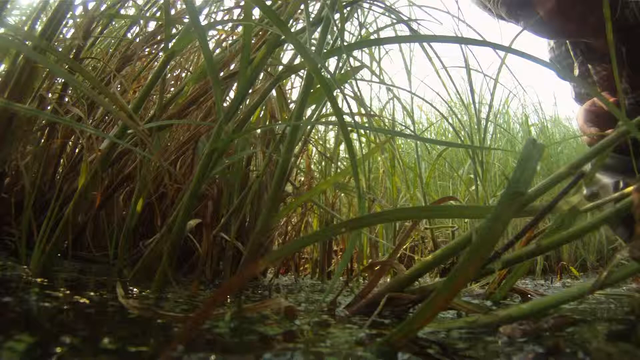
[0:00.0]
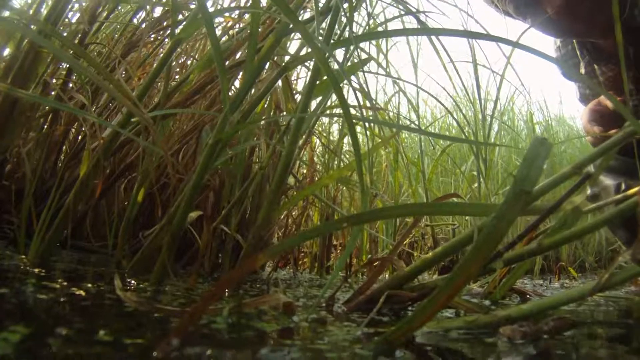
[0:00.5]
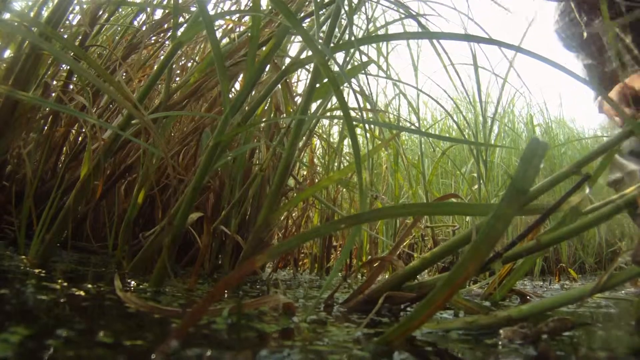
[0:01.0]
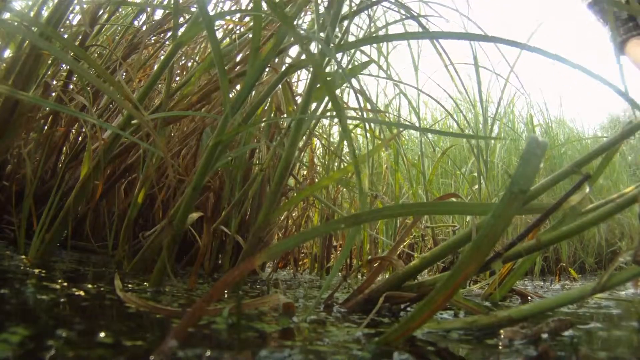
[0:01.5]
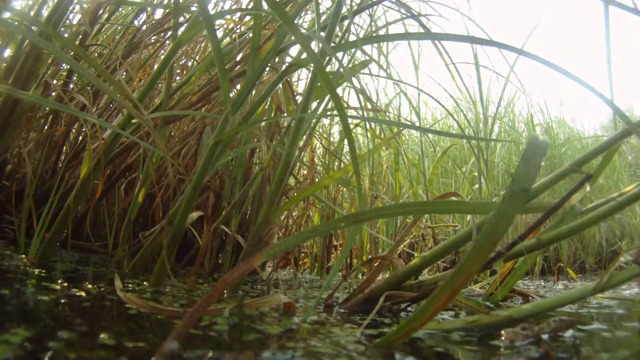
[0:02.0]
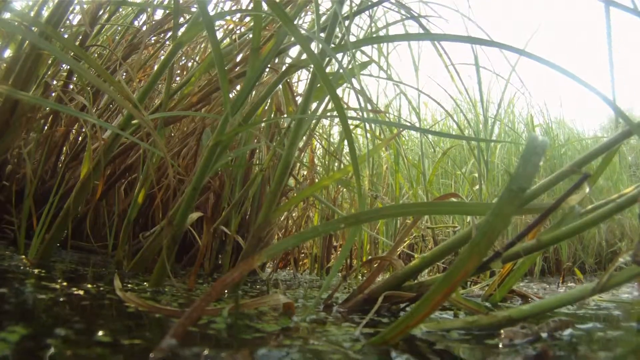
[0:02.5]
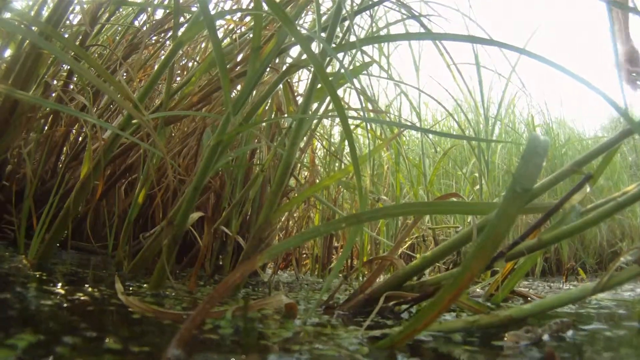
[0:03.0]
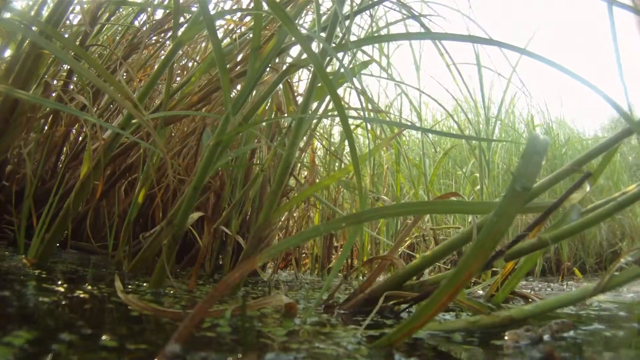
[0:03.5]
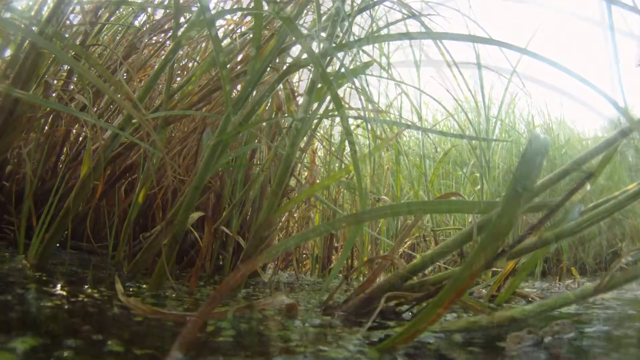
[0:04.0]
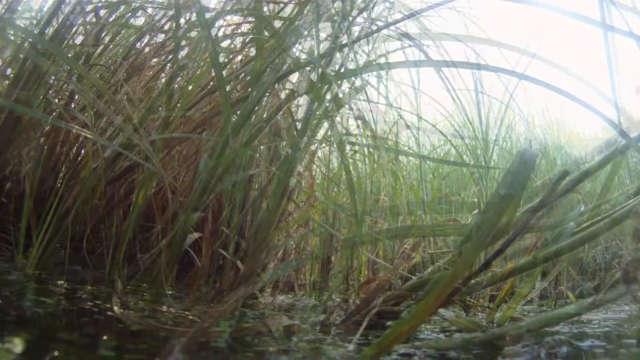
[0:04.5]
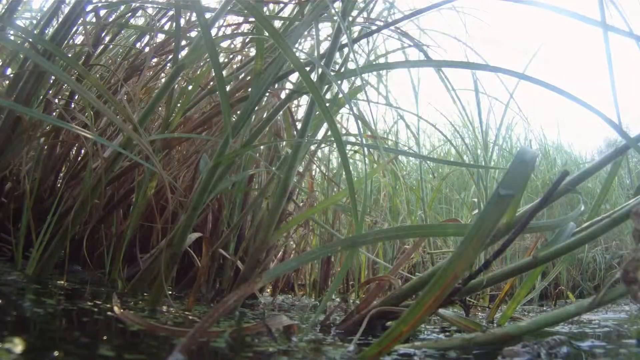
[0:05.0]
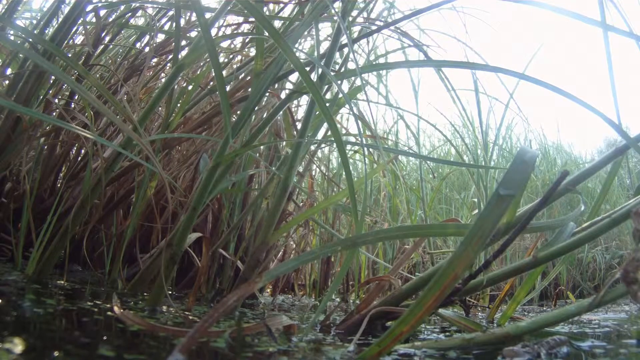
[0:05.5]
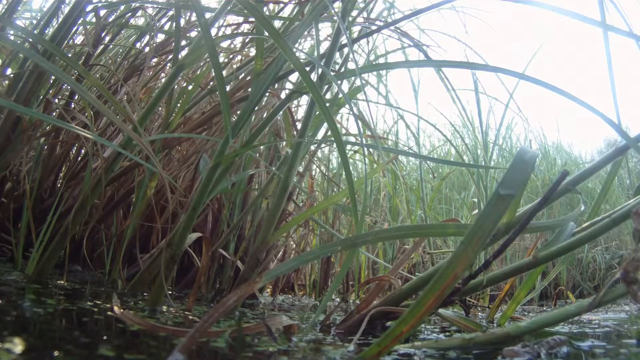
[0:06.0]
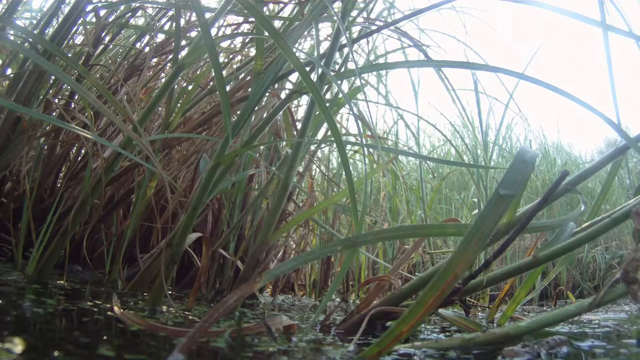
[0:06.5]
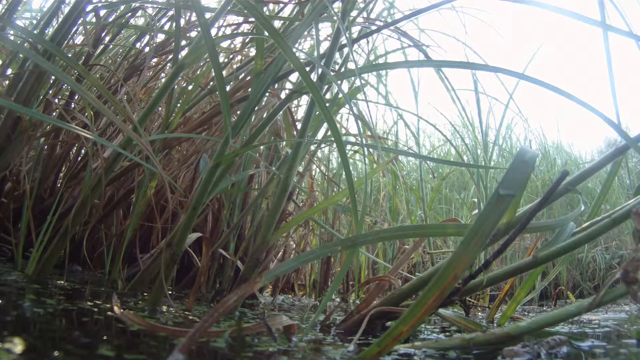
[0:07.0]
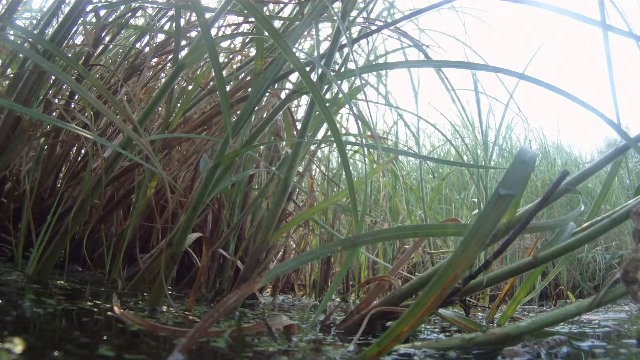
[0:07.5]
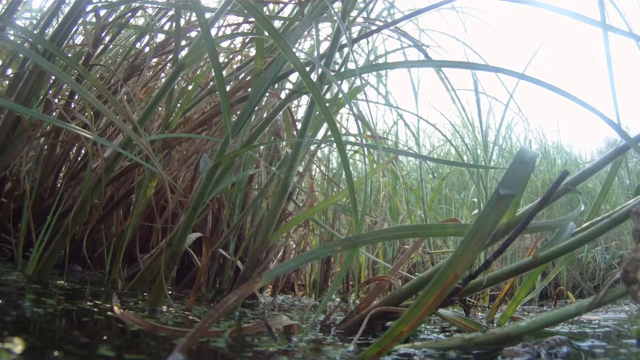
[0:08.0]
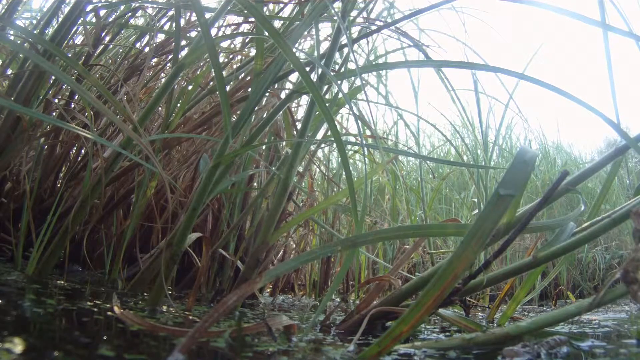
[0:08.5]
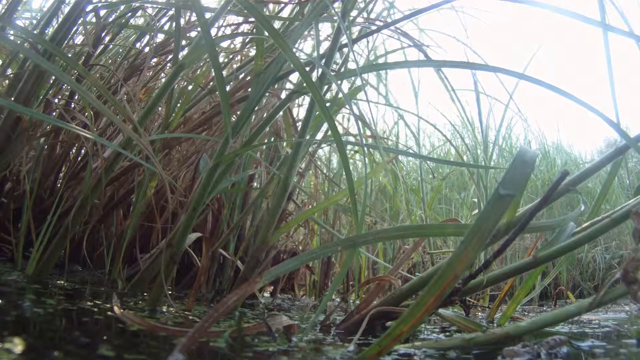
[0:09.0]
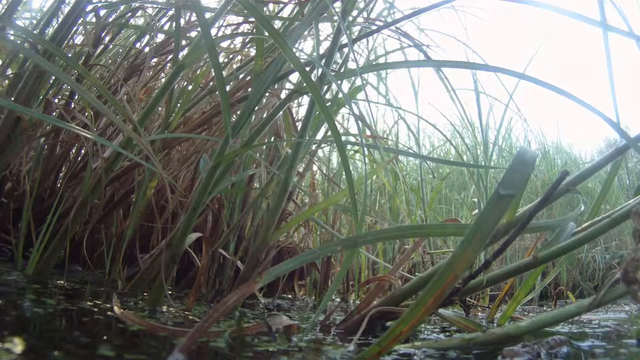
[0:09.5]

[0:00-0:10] Someone sets a camera on the ground, apparently in the middle of some sort of field. The field is very grassy, with a lot of very tall grass. At the beginning, the person setting down the camera is visible: he seems to be wearing camouflage and appears to have a cap on as well, and he looks directly at the camera from the top right of the screen.